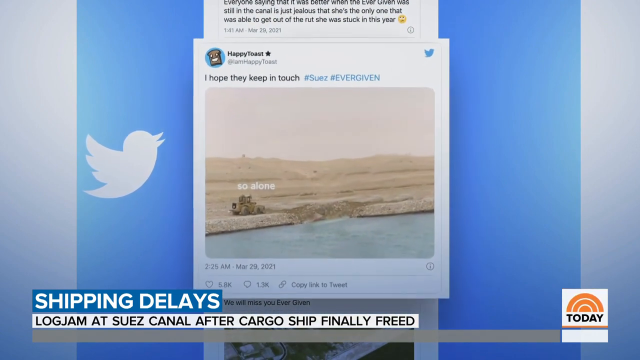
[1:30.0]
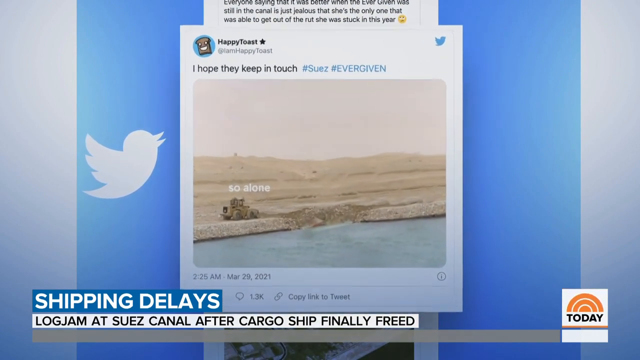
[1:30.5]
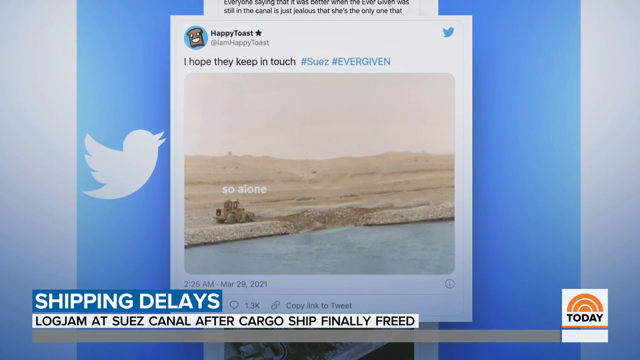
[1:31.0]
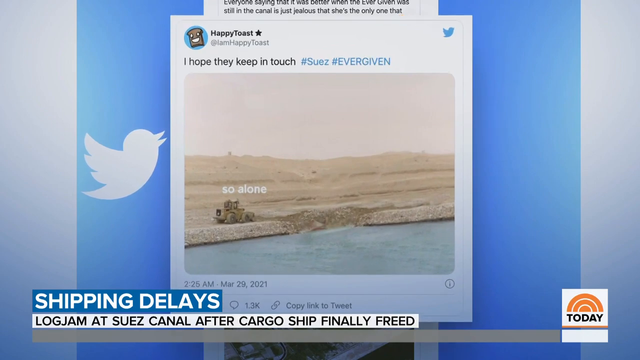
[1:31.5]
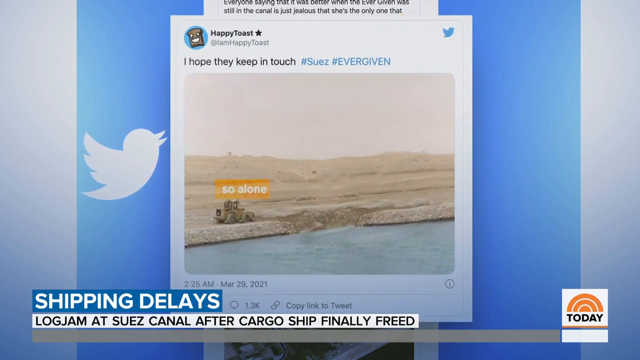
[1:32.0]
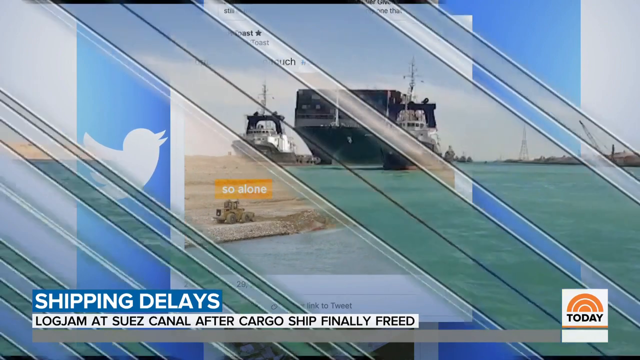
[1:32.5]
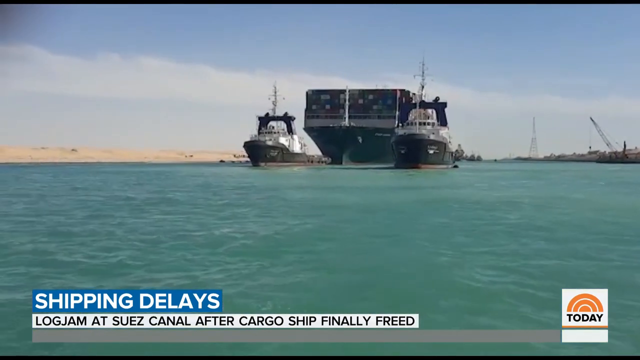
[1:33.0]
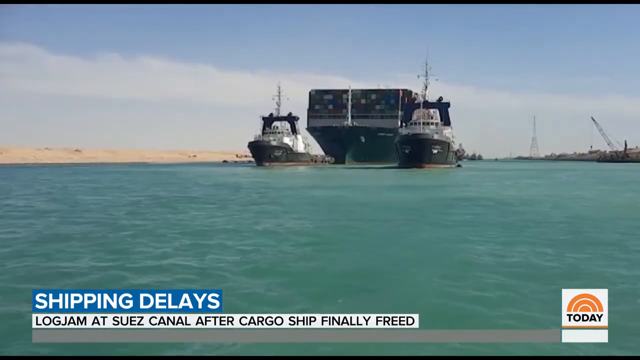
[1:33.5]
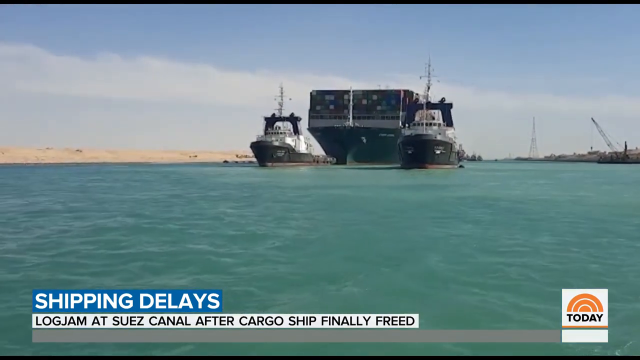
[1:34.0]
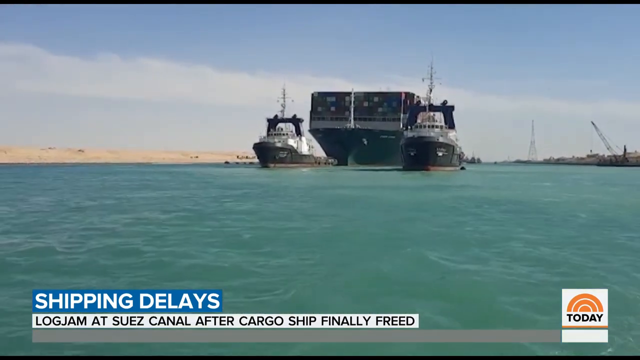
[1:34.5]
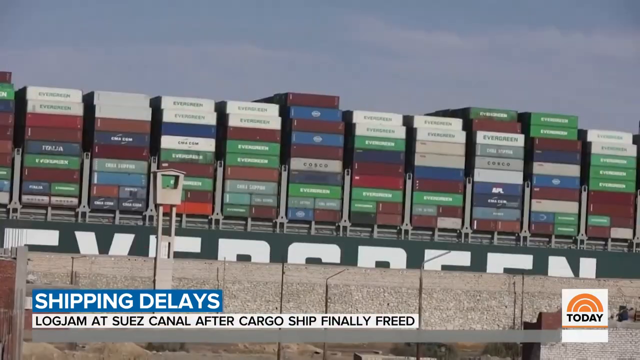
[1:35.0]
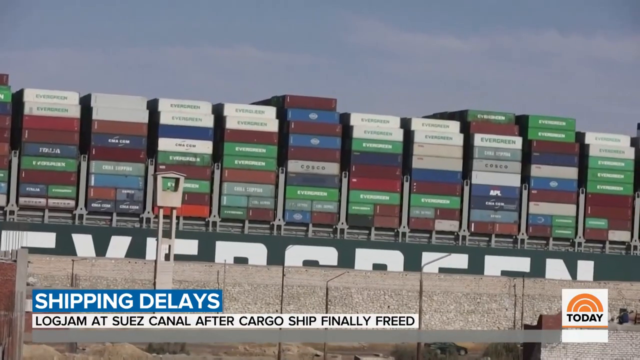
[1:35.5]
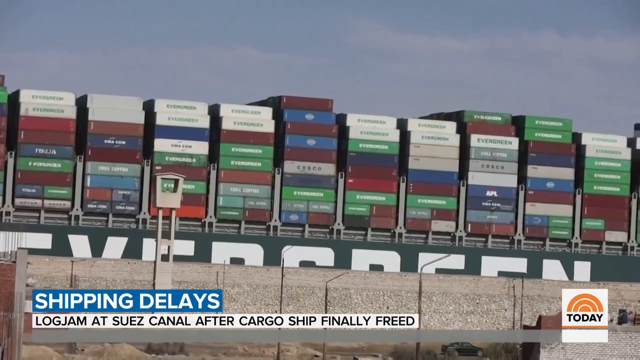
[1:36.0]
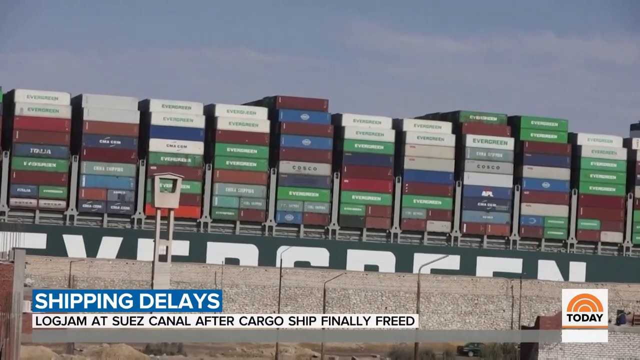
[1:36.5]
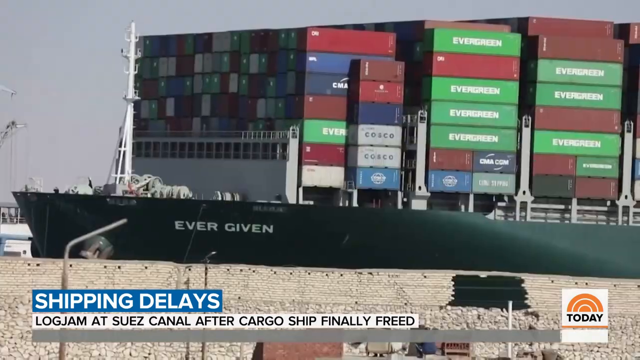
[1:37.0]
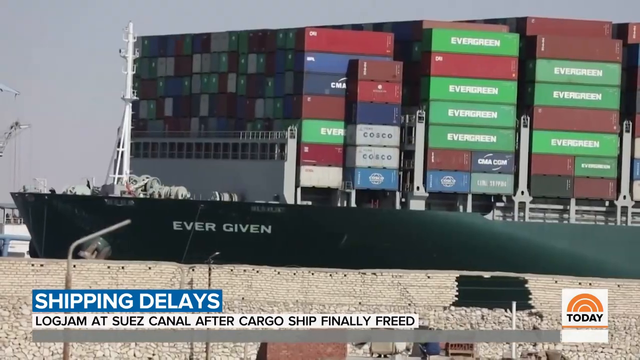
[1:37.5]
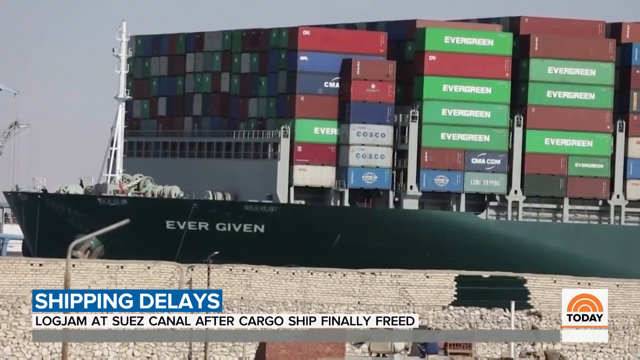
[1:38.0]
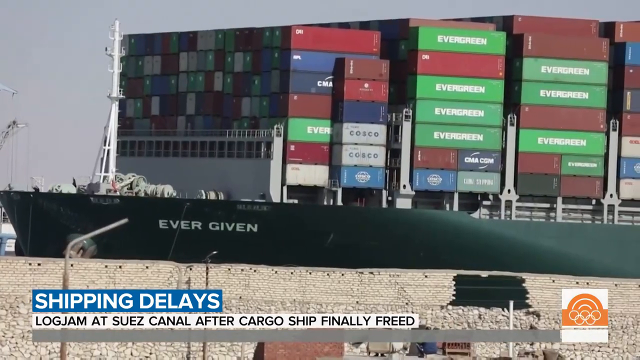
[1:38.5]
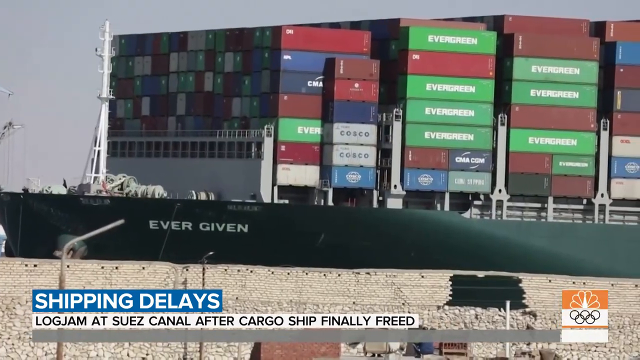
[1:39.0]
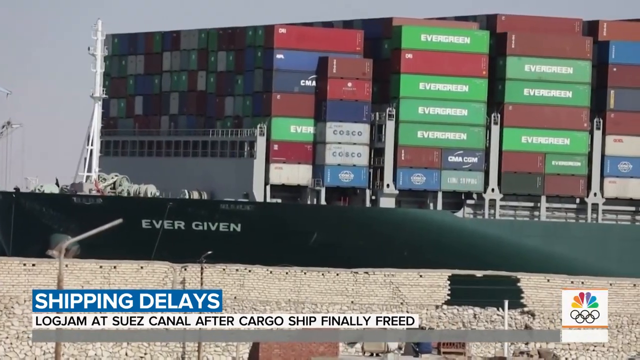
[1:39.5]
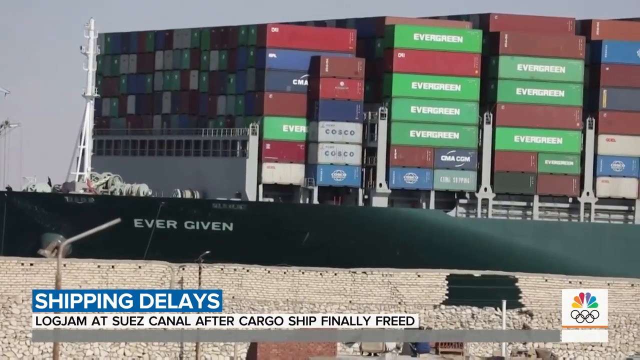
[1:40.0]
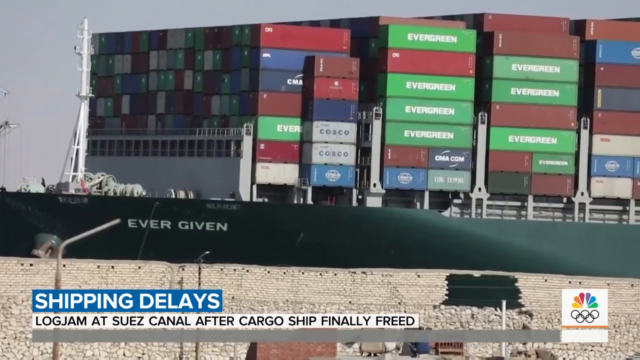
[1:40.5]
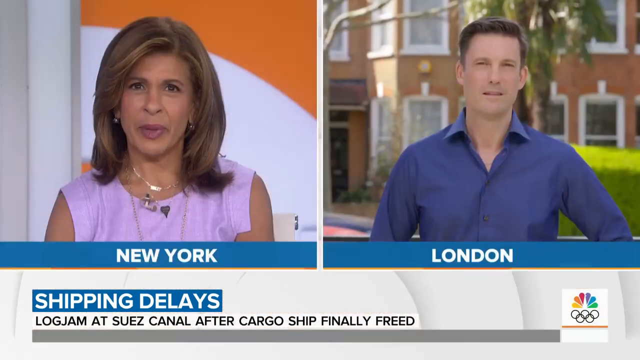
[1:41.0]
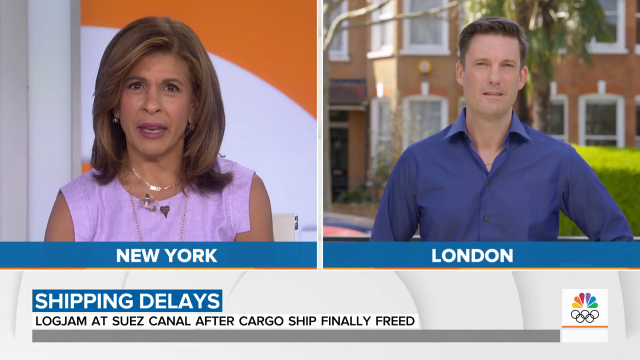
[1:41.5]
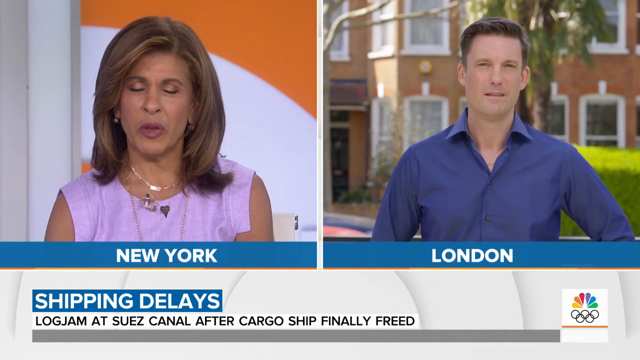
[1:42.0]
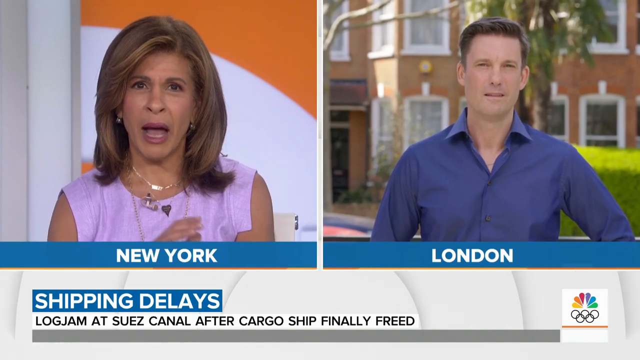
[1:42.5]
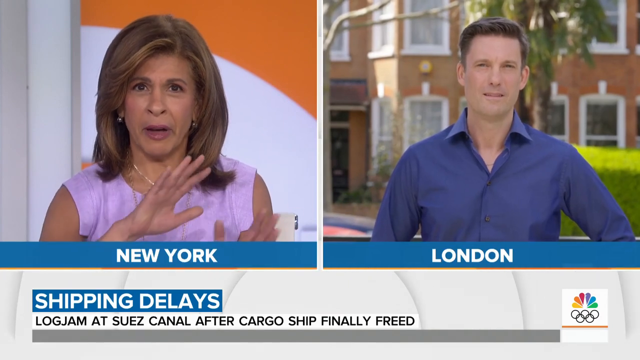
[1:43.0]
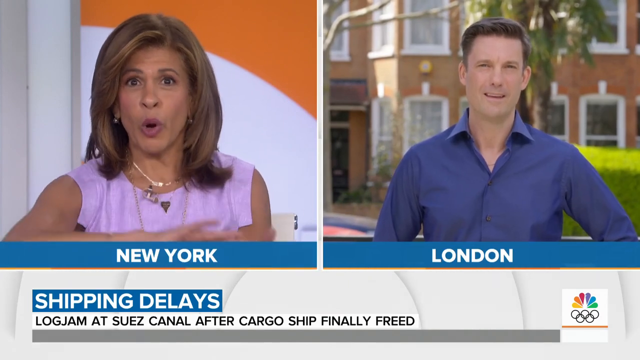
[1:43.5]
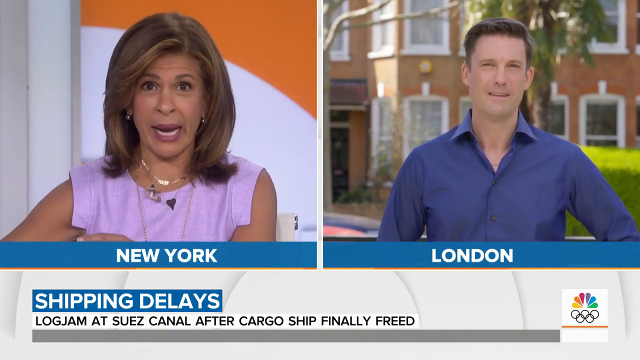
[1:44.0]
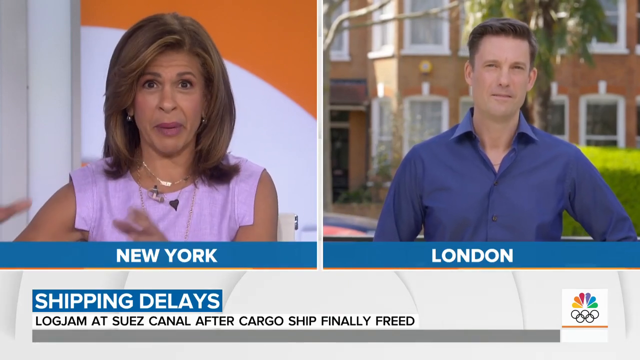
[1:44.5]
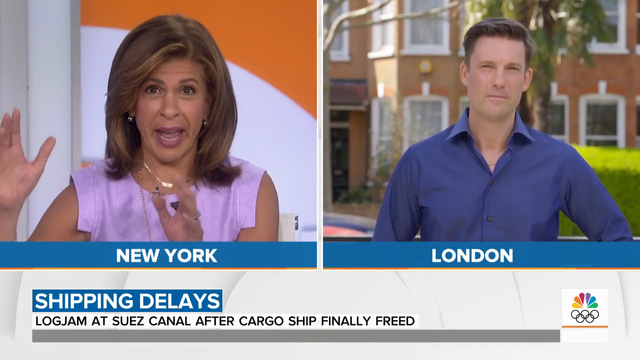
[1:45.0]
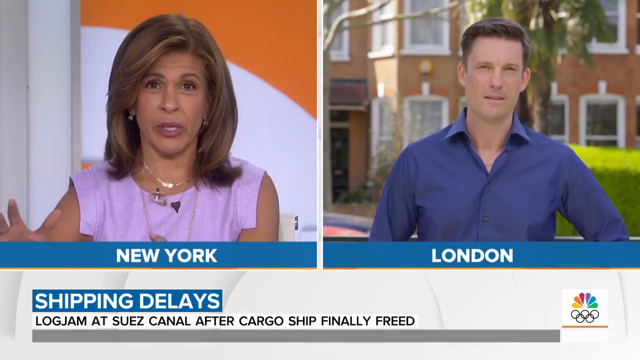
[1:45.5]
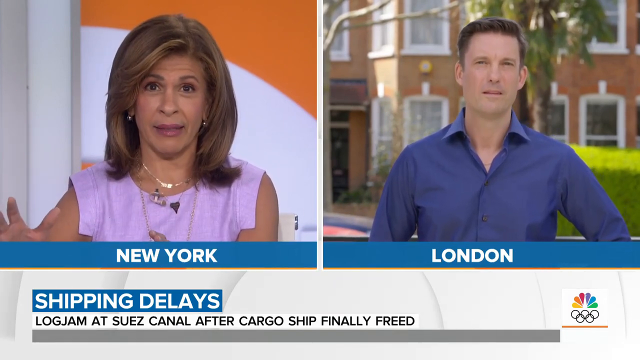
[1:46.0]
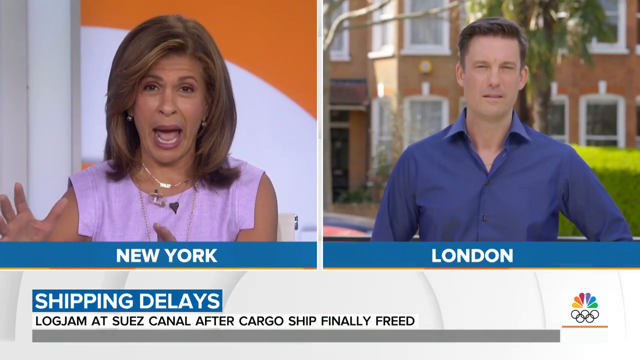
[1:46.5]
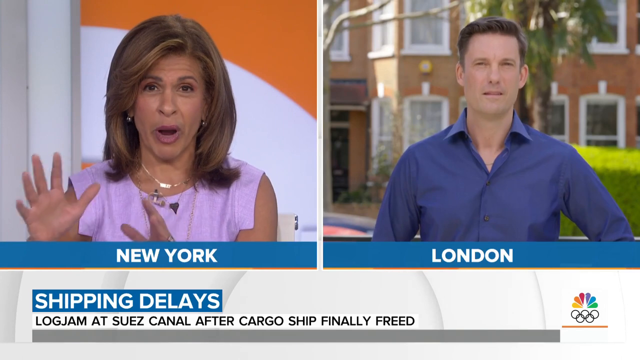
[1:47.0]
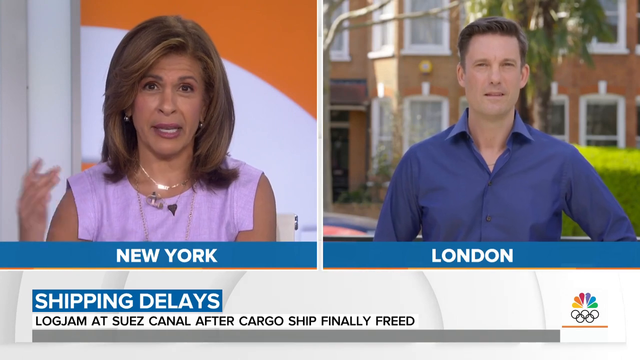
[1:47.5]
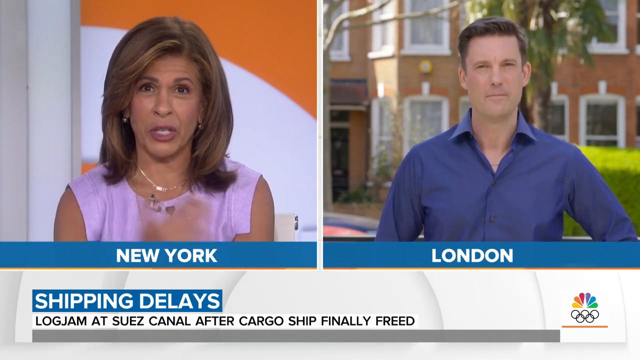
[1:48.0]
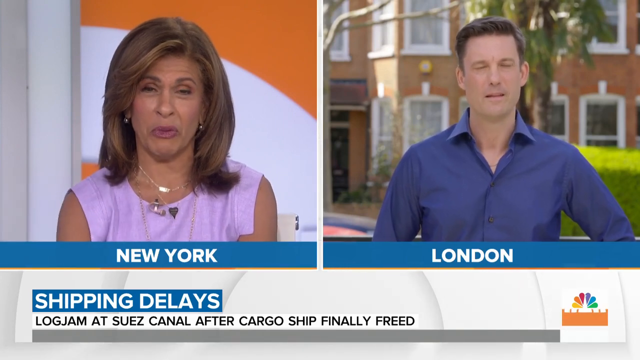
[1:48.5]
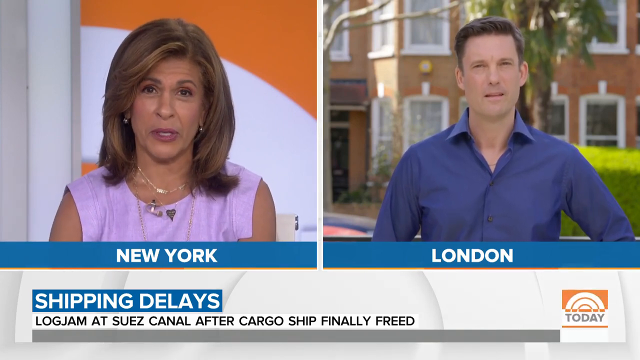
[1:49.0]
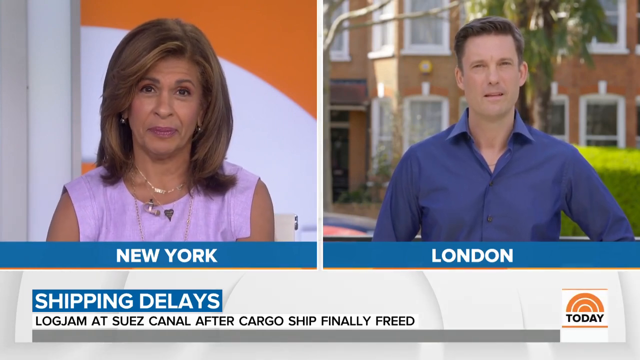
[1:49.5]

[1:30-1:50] A tweet reads "I hope they keep in touch." Below it is a meme showing a lone tractor in the middle of a desert field with the words "so alone." The title at the bottom is unchanged. Next, two boats are in front of a large ship in the middle, and then the camera angle changes to the side of the ship, which has lots of freight stacked on top of each other; many of the labels say "evergreen" in white text. The ship slowly moves to the left. The camera cuts to two reporters in two different locations: on the left side of the screen is a woman reporter from New York, and on the right is a male reporter from London in a blue collared shirt. The woman talks first, using hand gestures, raising her hands up and down with her palms appearing flat, while the man on the right nods his head up and down in agreement.